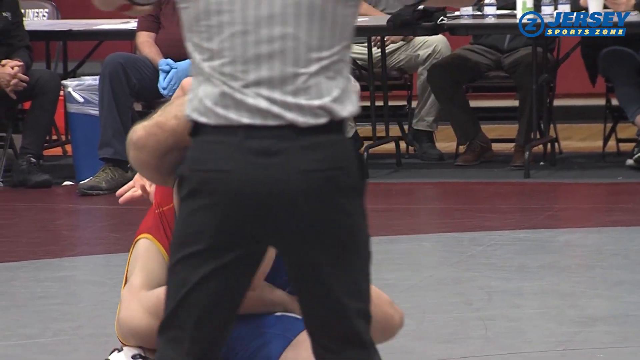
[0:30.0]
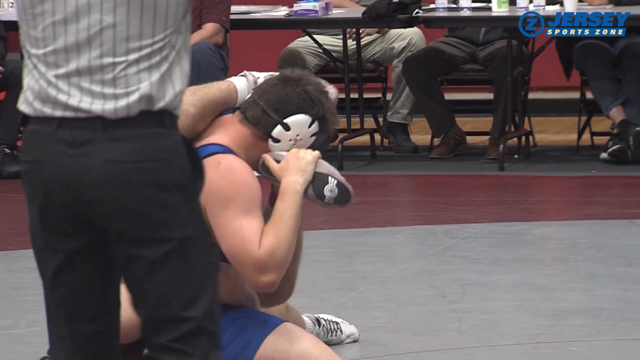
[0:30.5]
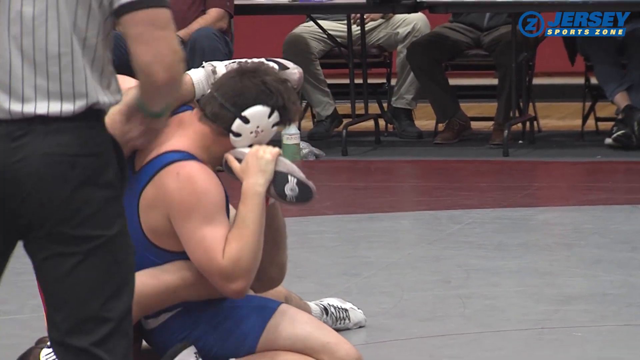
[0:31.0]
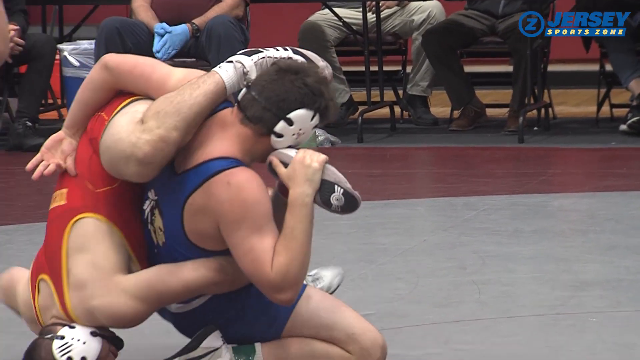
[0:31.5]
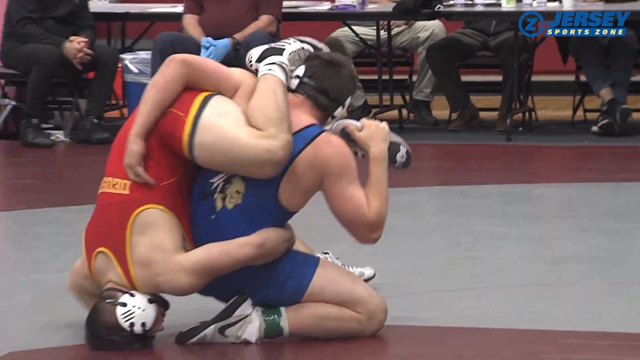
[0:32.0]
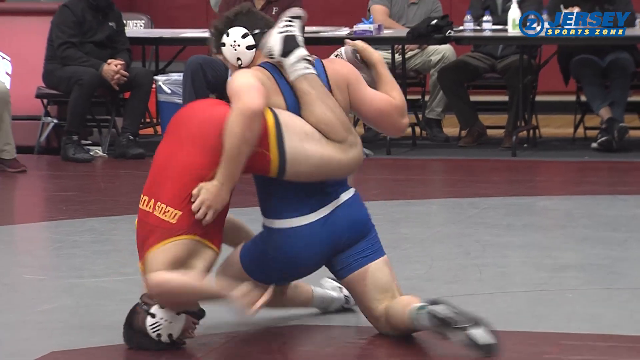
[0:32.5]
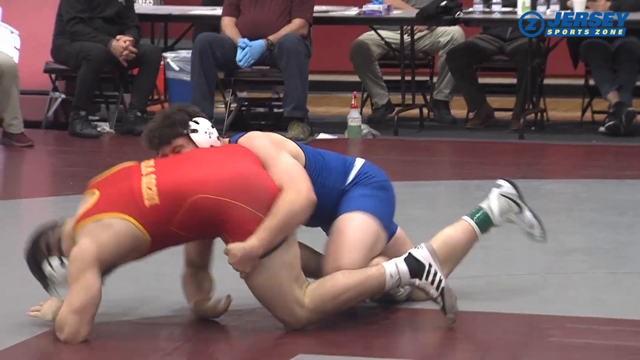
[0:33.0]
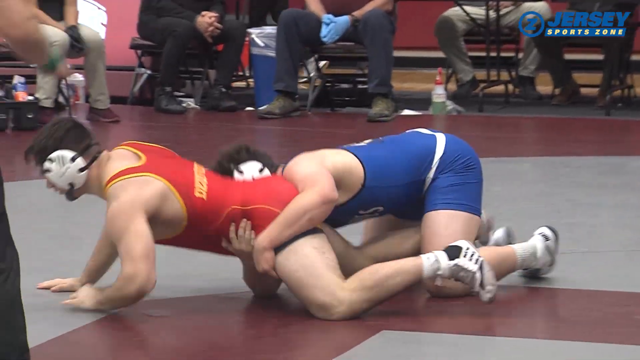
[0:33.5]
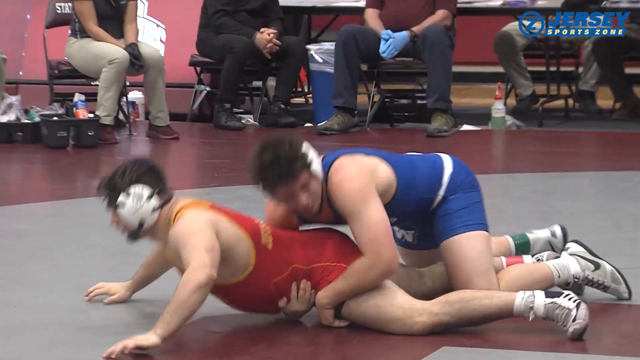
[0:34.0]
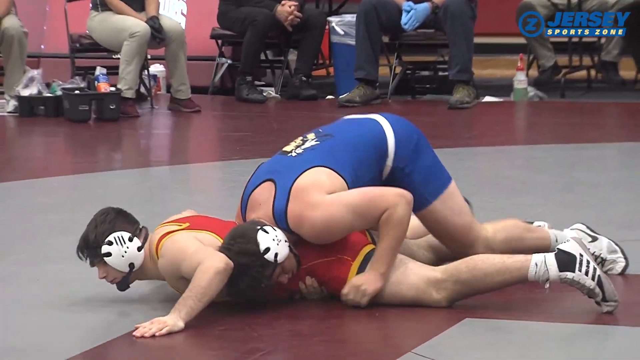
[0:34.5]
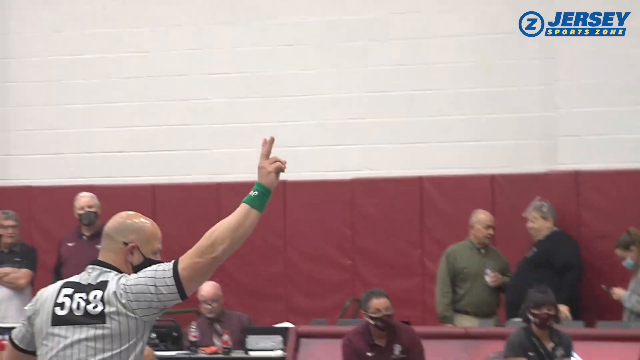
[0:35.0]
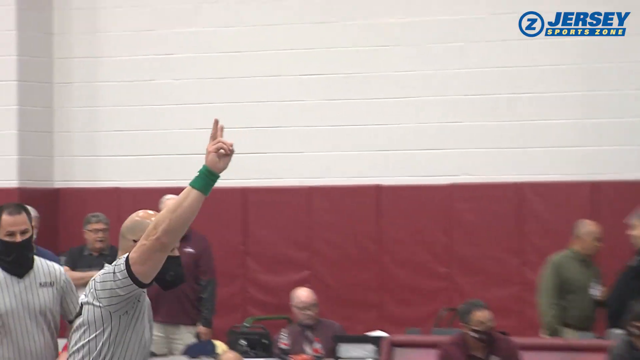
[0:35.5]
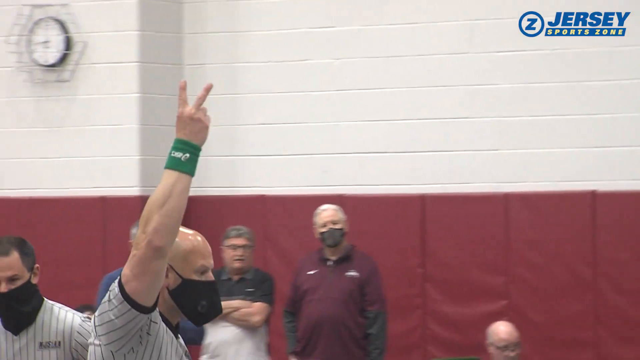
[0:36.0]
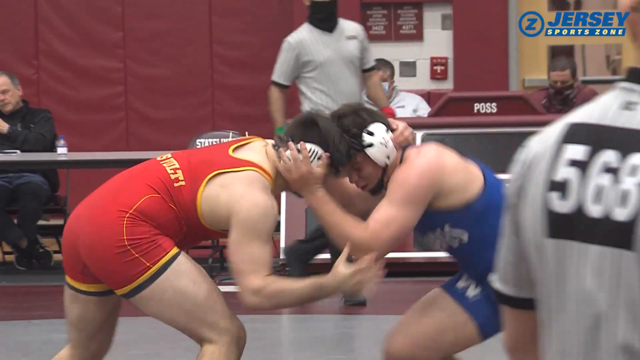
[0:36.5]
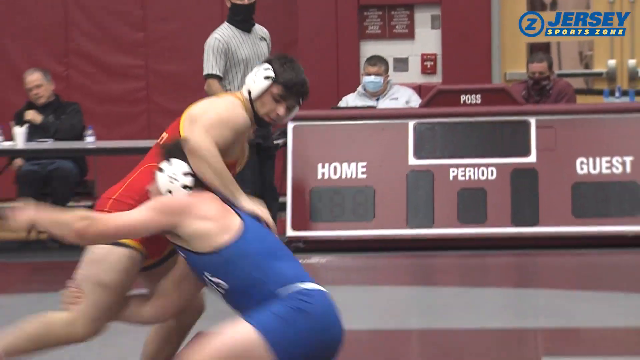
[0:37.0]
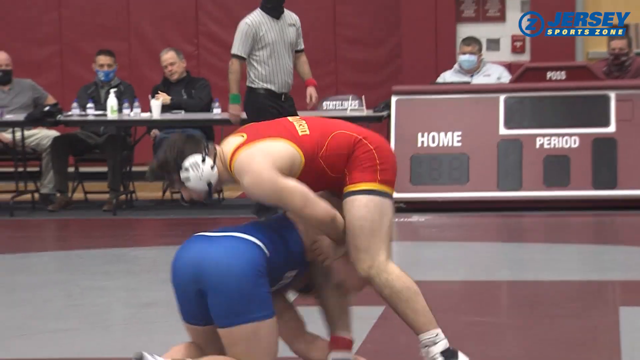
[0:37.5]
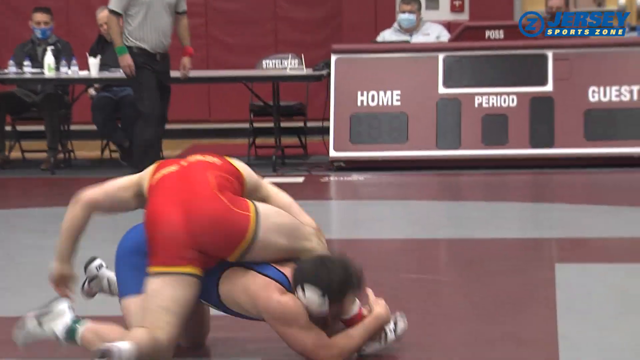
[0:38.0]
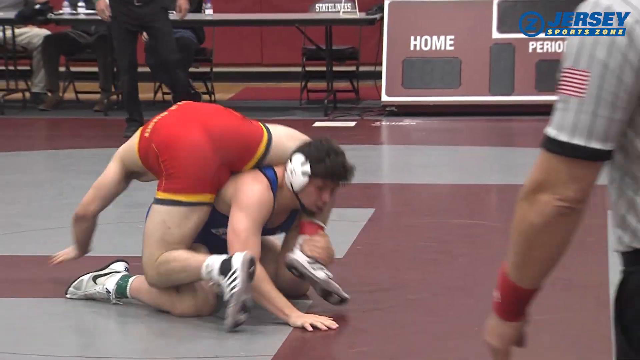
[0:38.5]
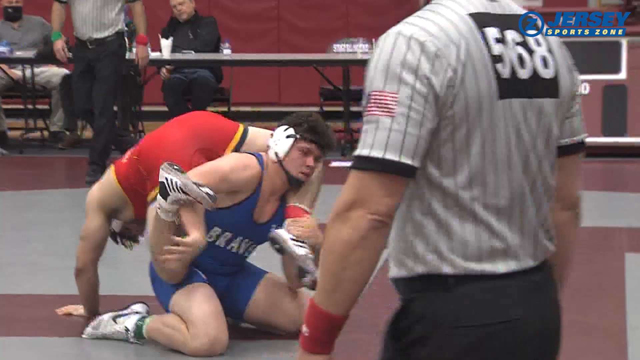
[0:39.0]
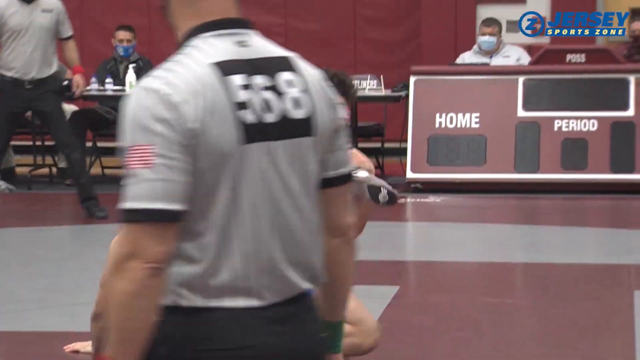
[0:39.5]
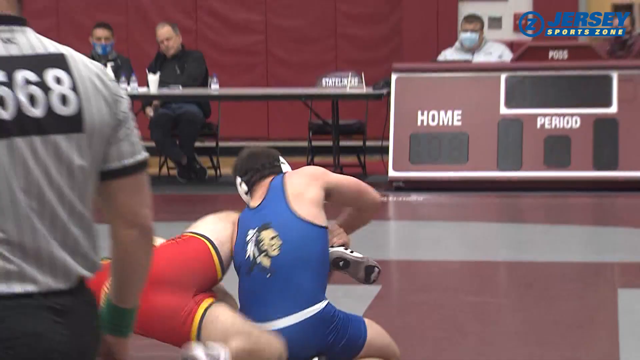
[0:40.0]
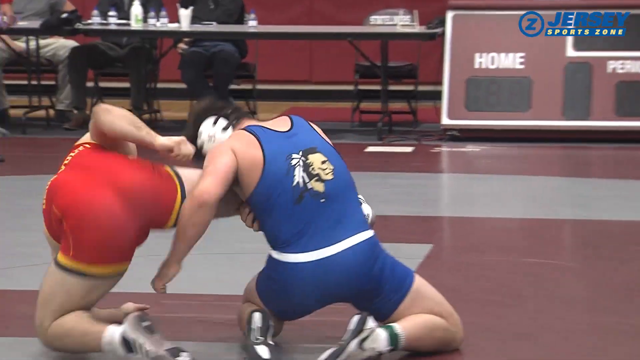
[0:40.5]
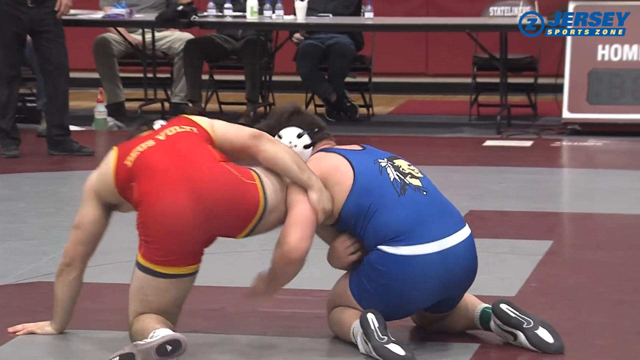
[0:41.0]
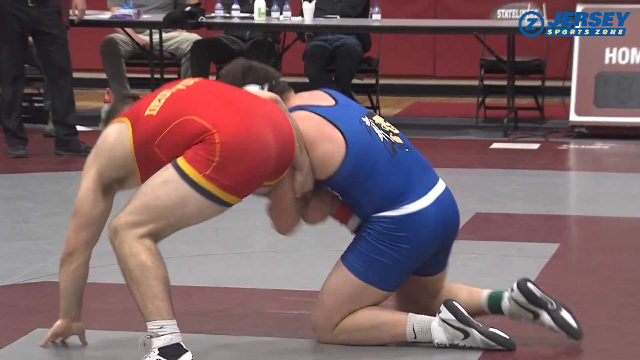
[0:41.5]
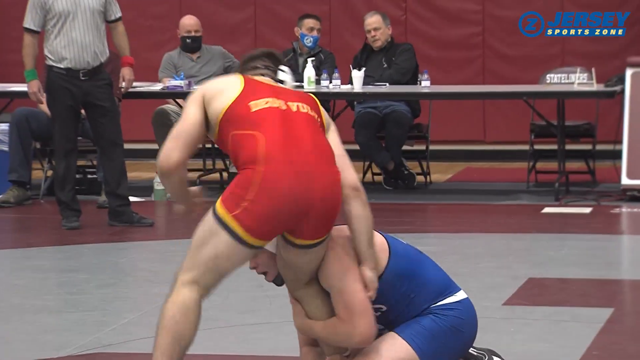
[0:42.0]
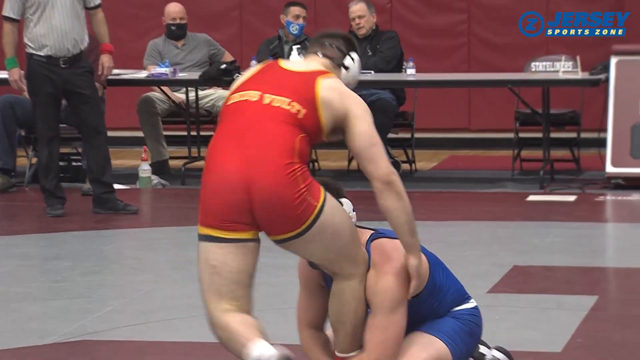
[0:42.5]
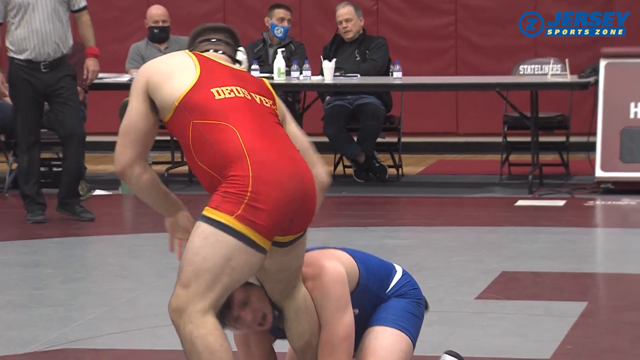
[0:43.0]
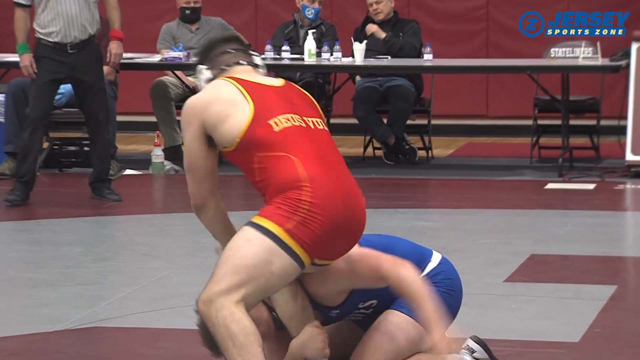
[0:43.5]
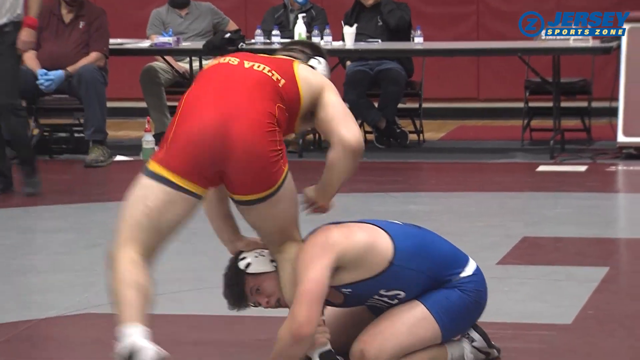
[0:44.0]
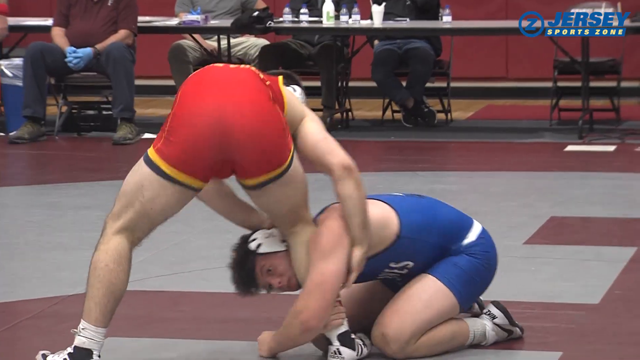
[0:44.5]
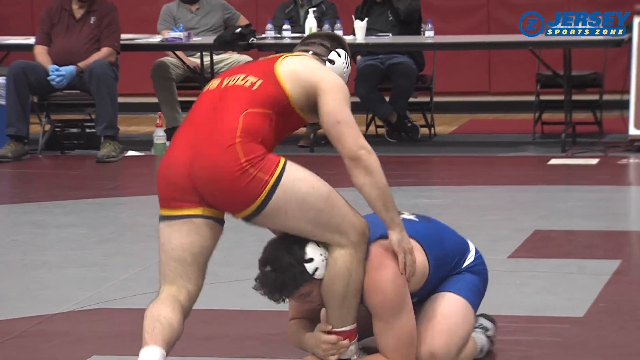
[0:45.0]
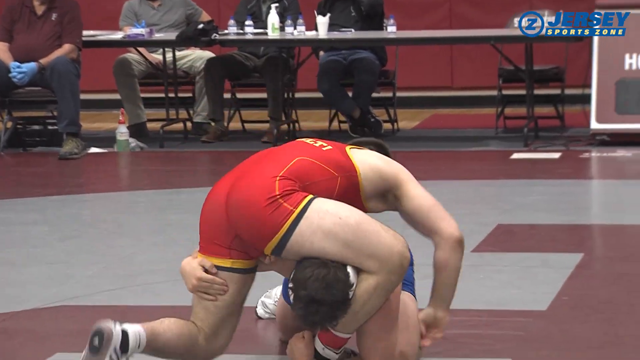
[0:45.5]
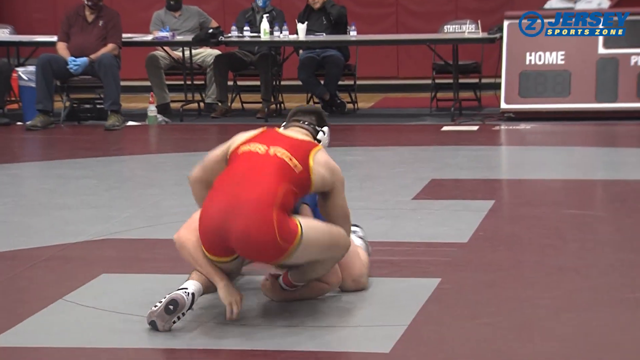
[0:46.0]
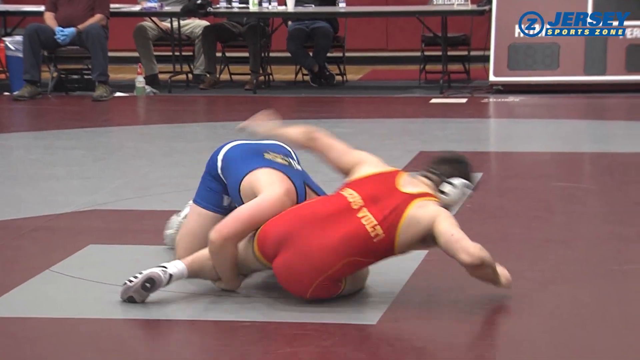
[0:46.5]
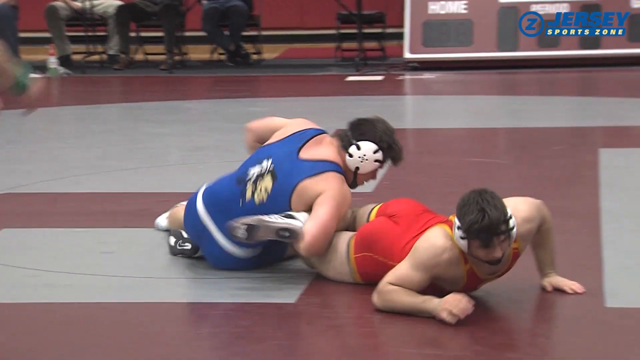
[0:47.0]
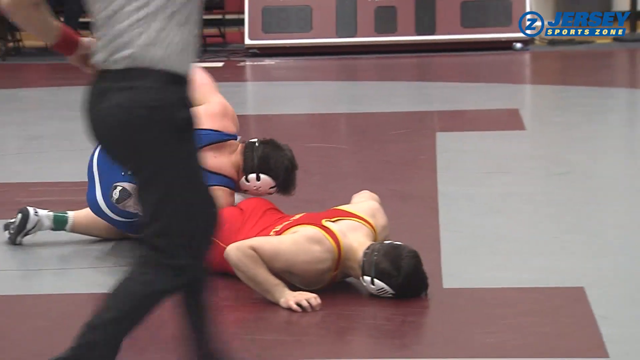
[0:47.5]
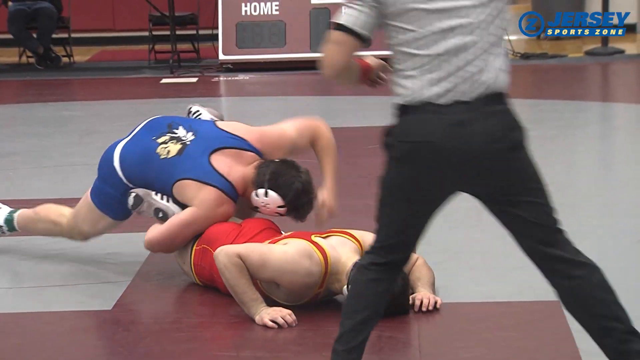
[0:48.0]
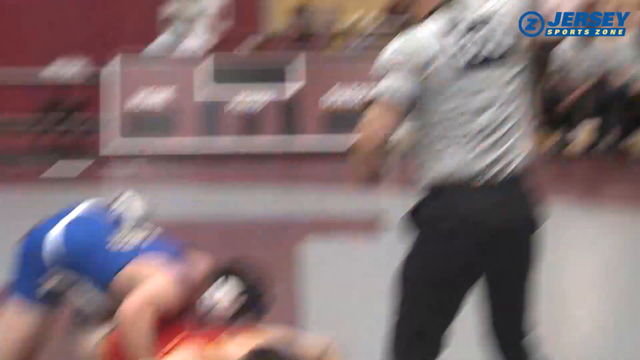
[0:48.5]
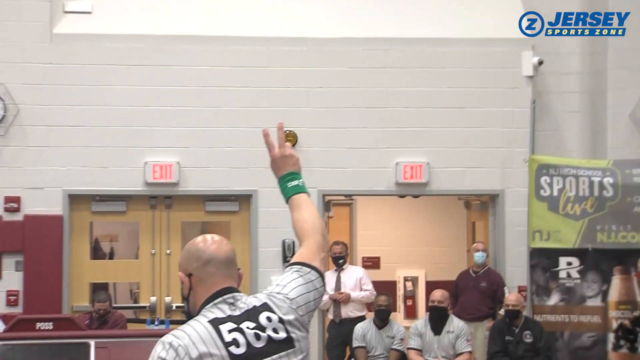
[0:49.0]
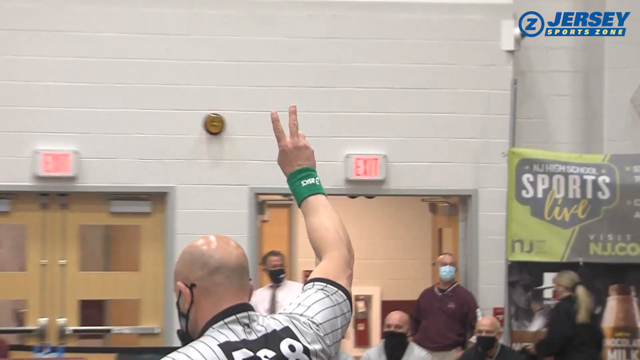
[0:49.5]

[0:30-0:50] A low, up-close shot shows the two wrestlers grappling. The one in red is upside down, his left leg bent at a 90-degree angle over the blue wrestler's back with his foot to the side of the blue wrestler's face, and his left arm wrapped backwards around the blue wrestler's abdomen. The wrestler in blue is almost sitting on the ground, his right hand bent at about a 45-degree angle grabbing the other wrestler's shoe. The video slowly zooms out to show the red wrestler lying on his stomach with his legs on the floor and his arms pushing himself up, while the blue wrestler has his arms wrapped around the red wrestler's midsection and his legs straddled around the red wrestler's right leg. He then pushes him down. The camera angle rises as the focus shifts to the referee on the left, who holds two fingers in the air, like a peace sign or the number two, and lifts his right wrist, which wears a green sweatband. The video then returns to the two wrestlers performing various wrestling moves and maneuvers.